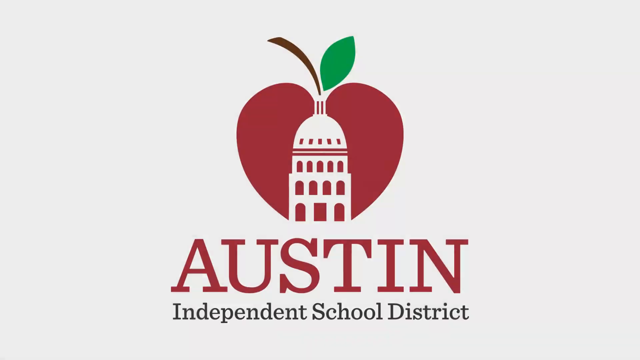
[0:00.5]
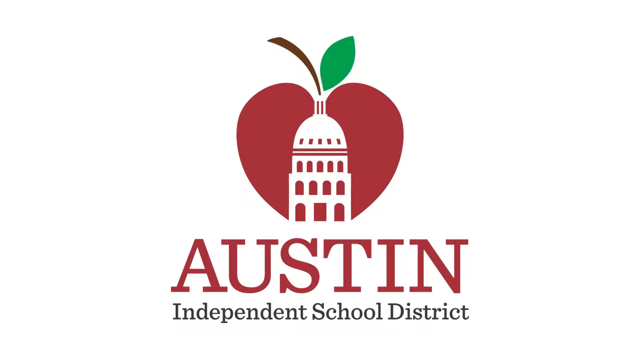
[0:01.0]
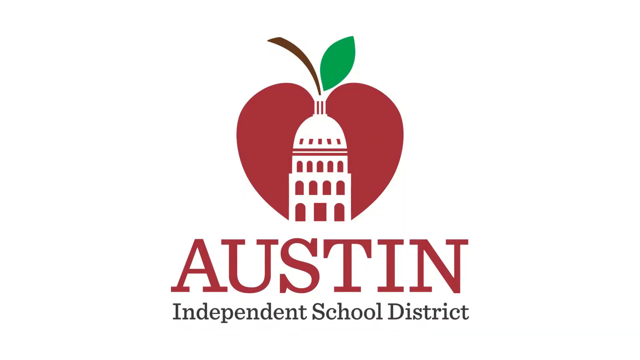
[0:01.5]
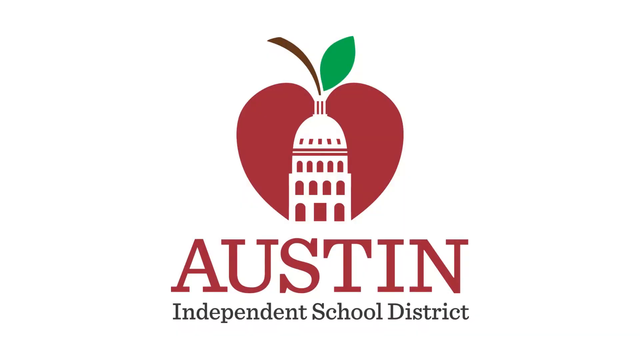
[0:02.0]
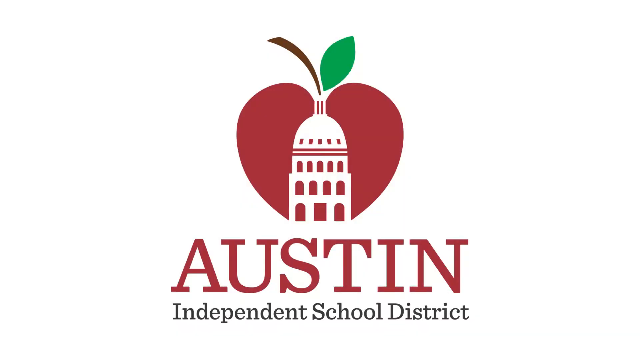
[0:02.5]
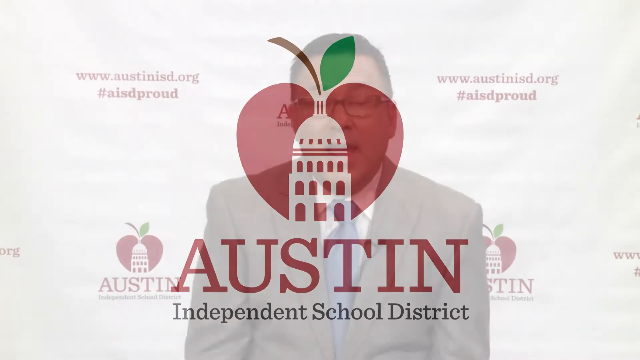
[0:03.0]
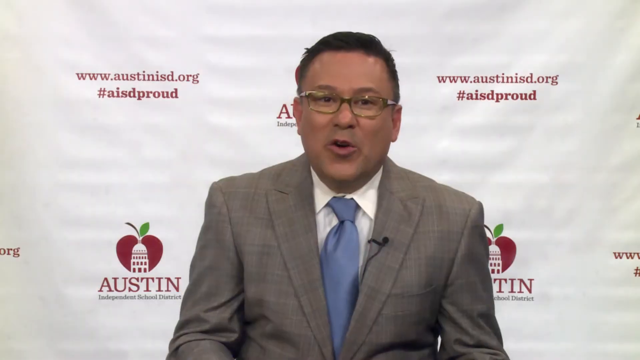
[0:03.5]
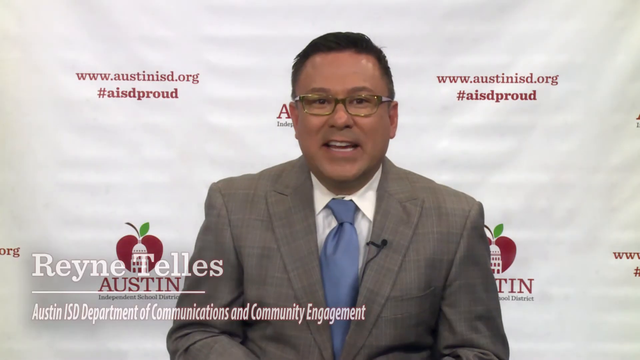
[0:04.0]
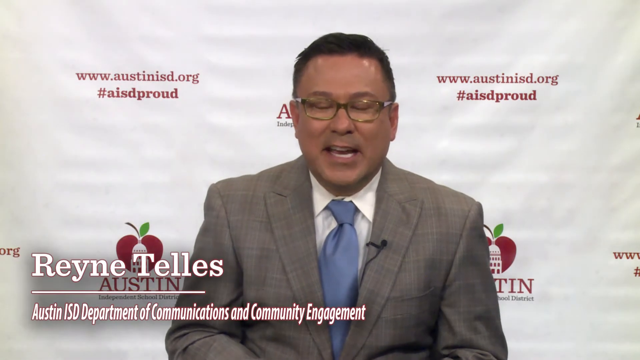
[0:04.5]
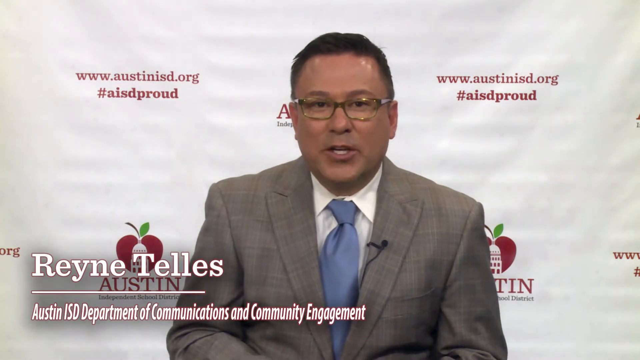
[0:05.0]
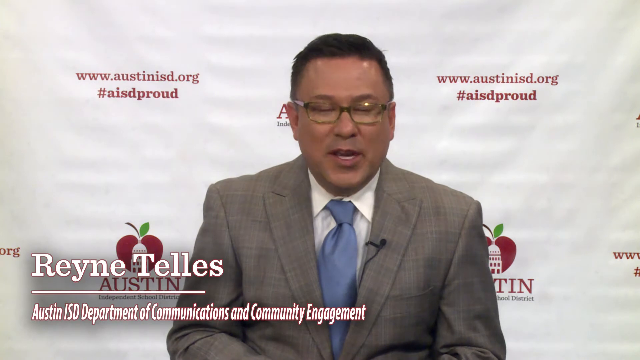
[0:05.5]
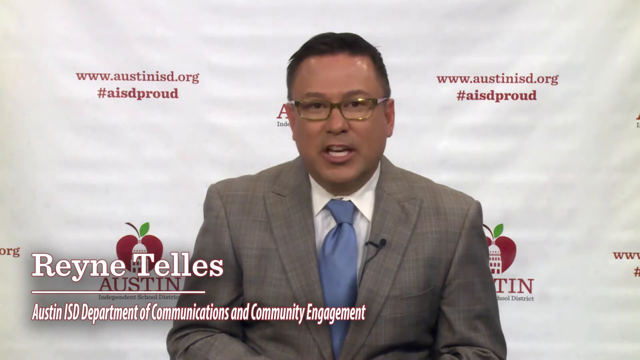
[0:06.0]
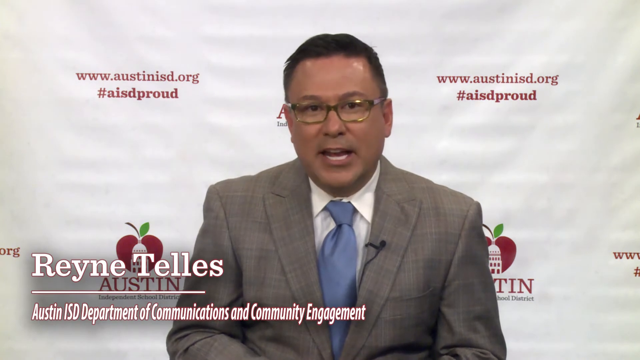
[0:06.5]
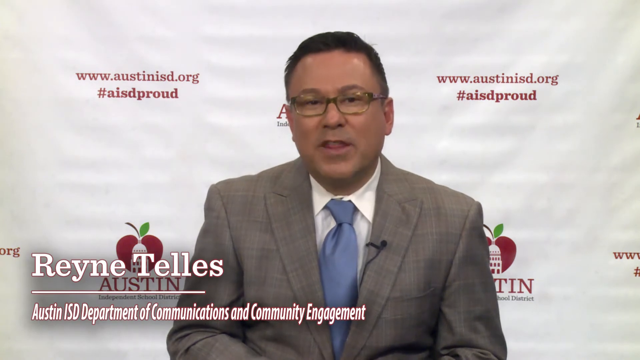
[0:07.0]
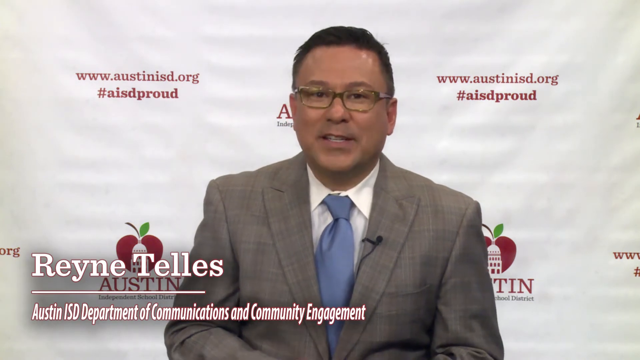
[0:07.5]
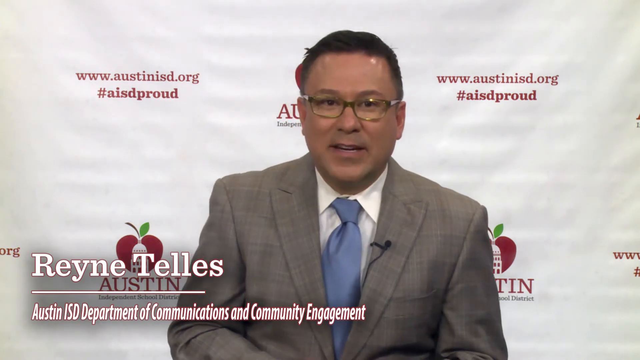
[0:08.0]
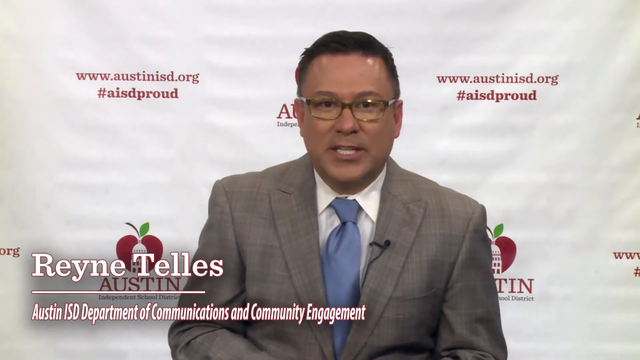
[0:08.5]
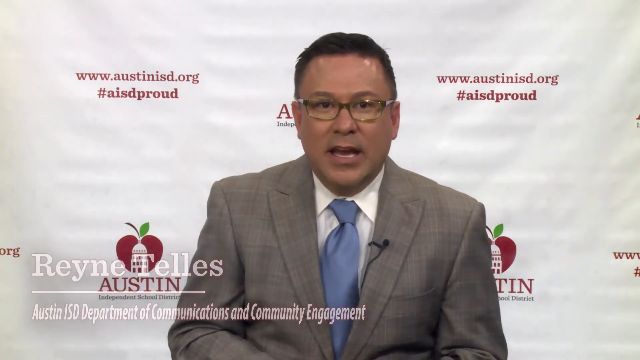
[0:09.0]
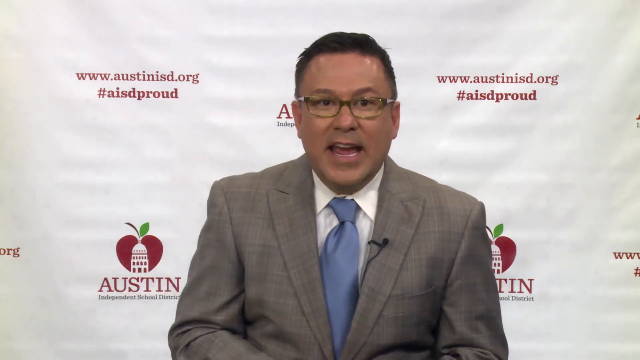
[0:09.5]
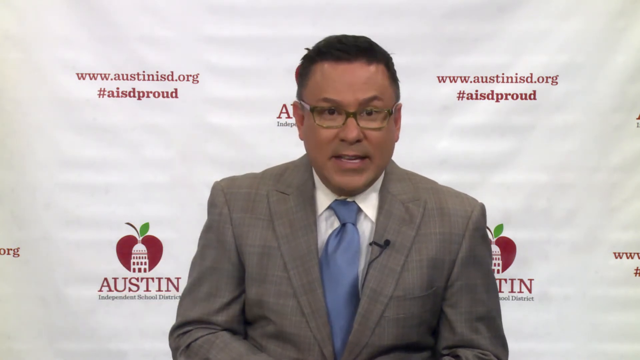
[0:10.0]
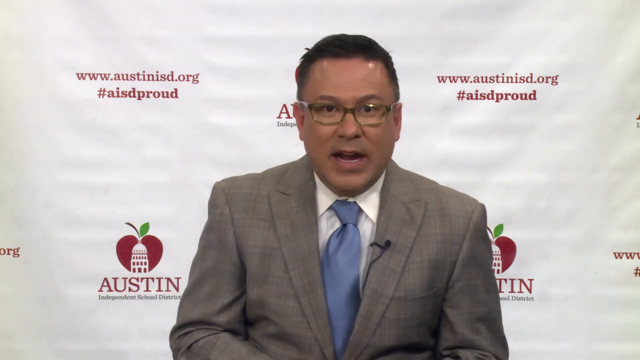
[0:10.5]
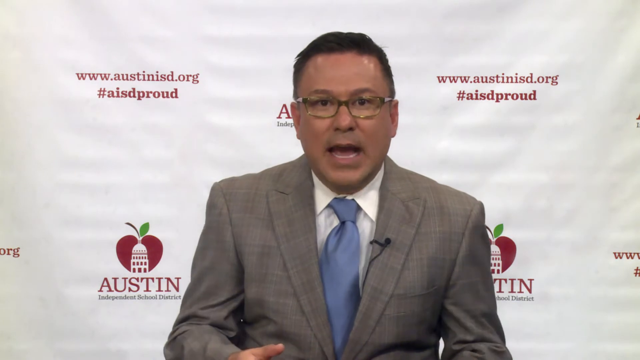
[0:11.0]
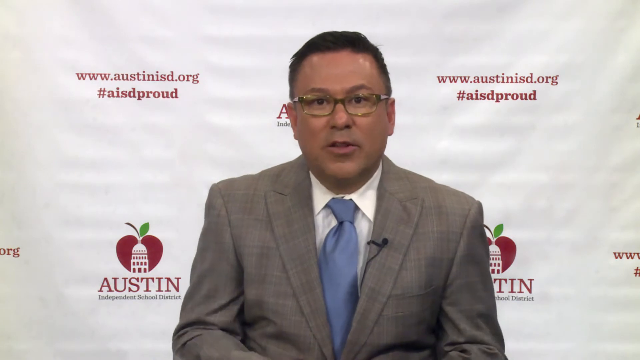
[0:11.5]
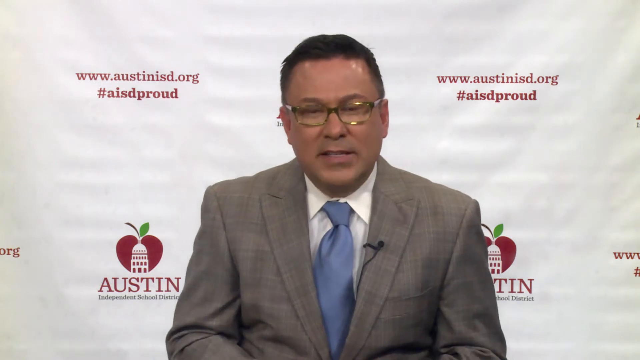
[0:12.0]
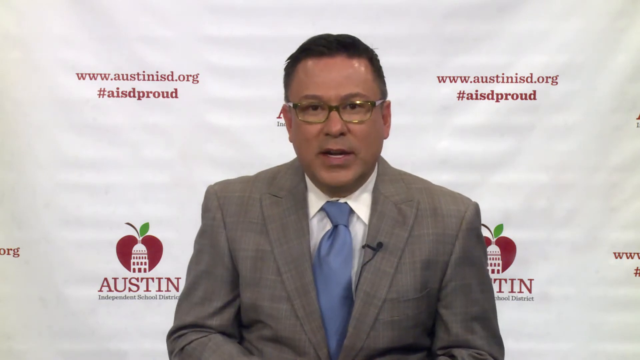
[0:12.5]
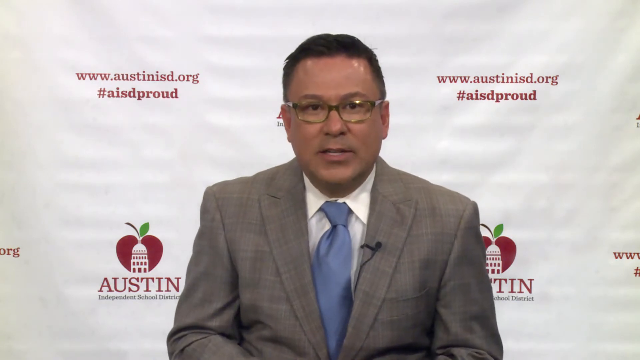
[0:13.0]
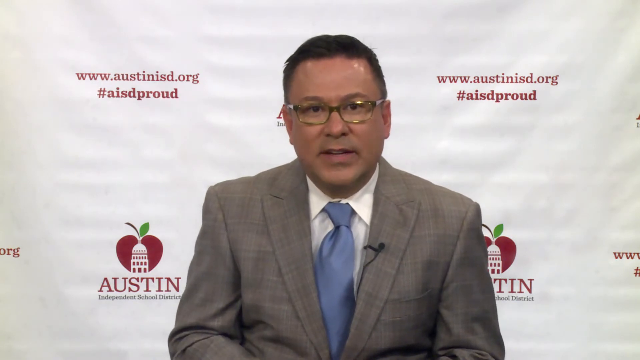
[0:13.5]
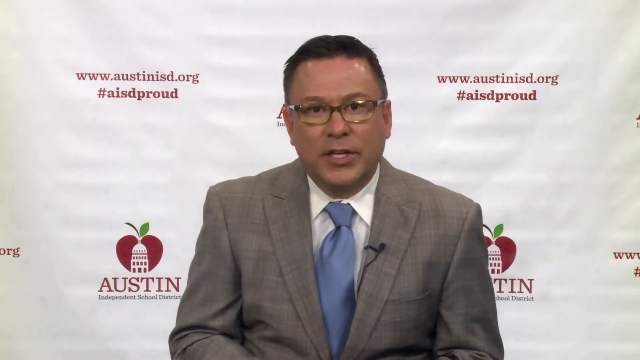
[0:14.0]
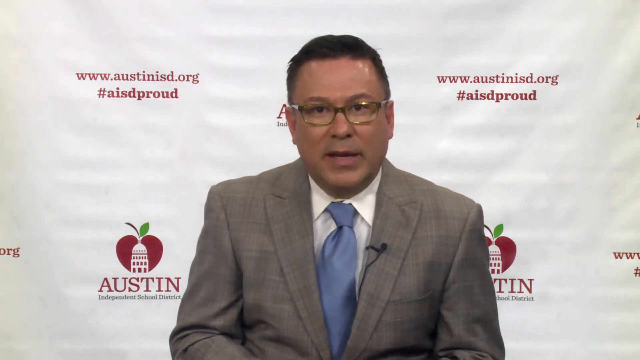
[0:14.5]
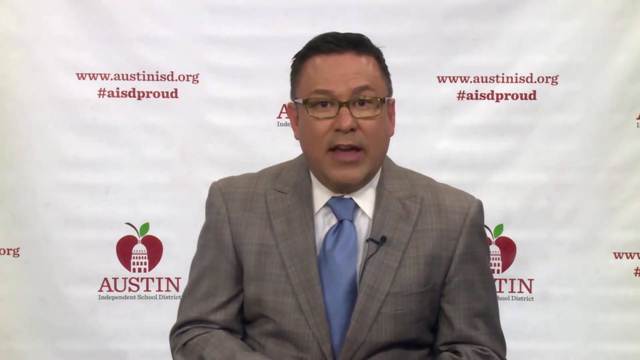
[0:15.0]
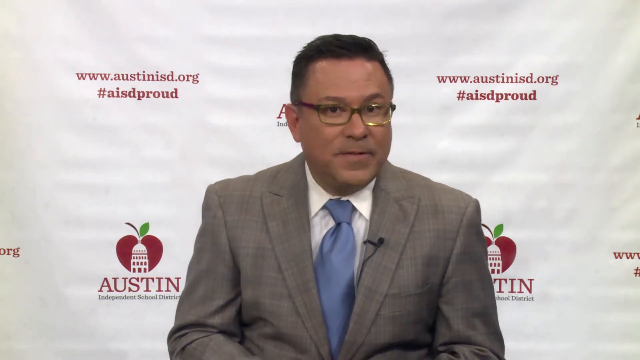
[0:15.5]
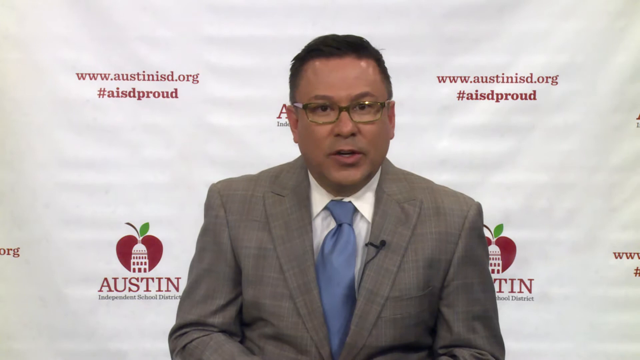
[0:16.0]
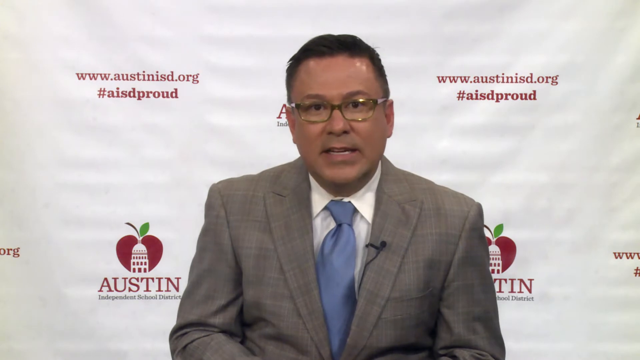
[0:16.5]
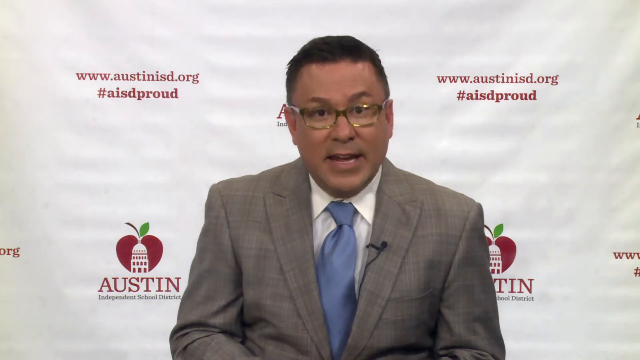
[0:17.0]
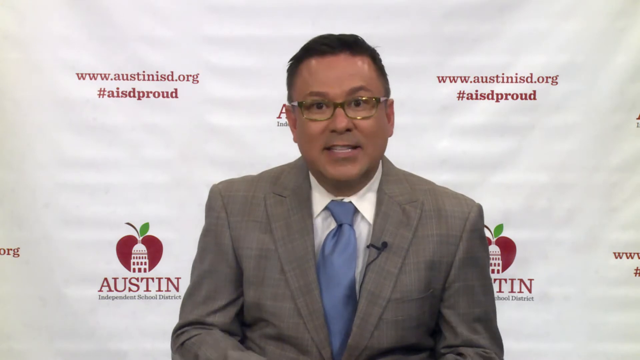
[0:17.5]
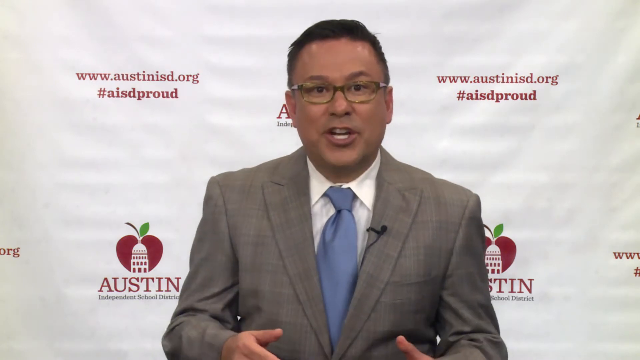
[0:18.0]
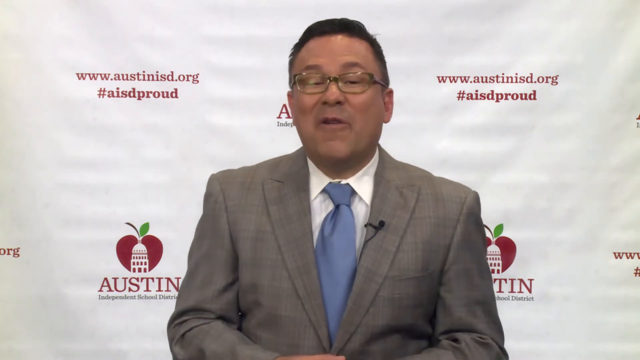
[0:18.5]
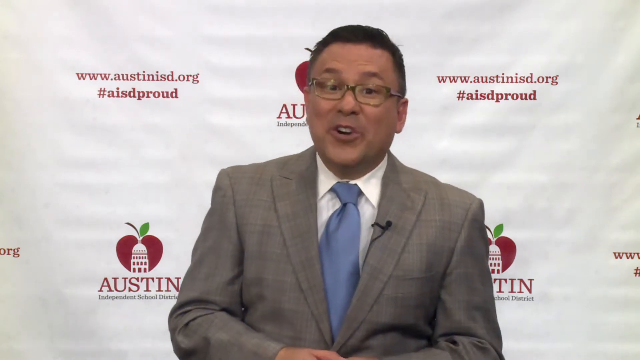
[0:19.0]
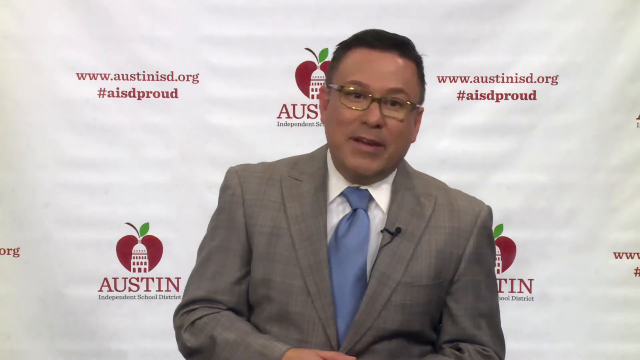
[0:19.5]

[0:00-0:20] On a white background there is a red apple logo; inside the apple is something like a Capitol building, and the text reads "Austin Independent School District." A man then appears on screen, wearing something like a gray blazer or jacket, a white shirt and a blue tie, with a small microphone attached to the inside of his jacket. He wears glasses. His name is Rene, spelled R-E-Y-N-E, and the text says "Austin ISD Department of Communications and Community Engagement." In the background the text reads "#AISD proud." He talks throughout the shot.